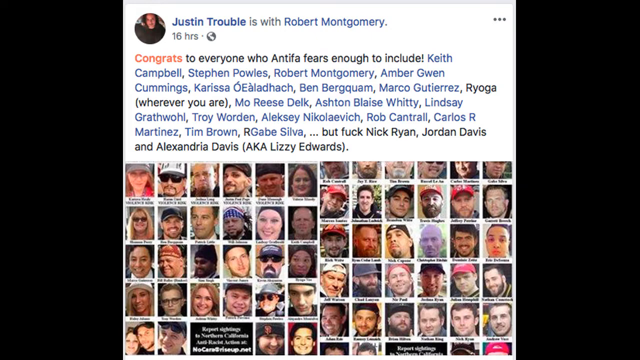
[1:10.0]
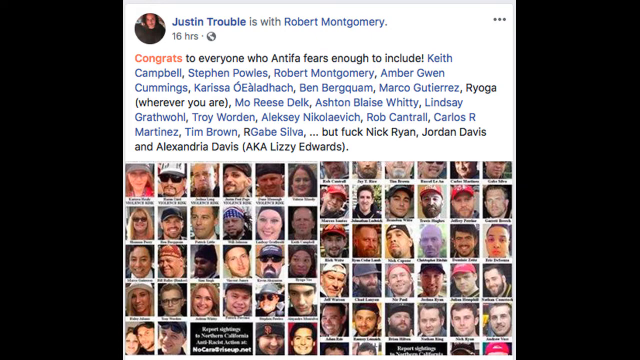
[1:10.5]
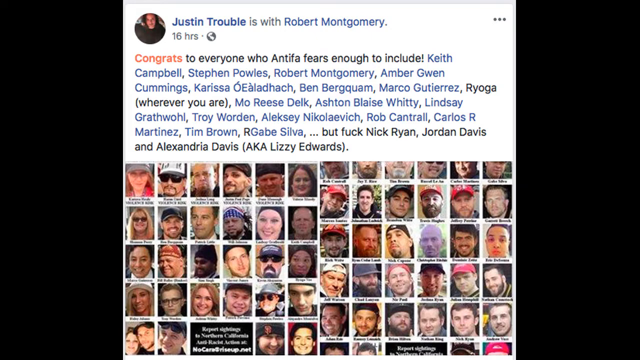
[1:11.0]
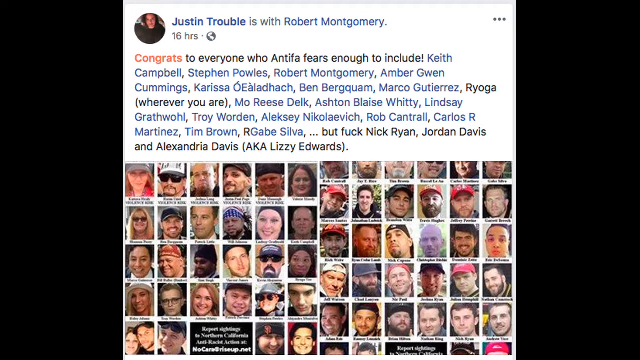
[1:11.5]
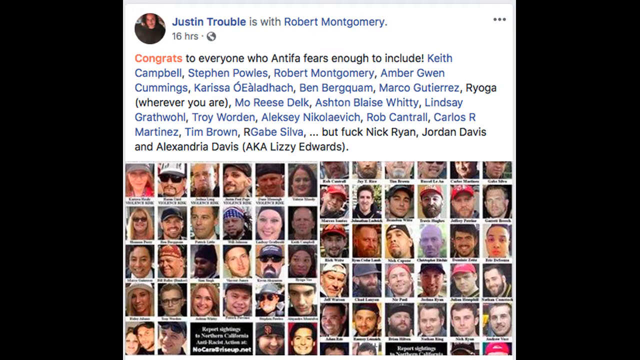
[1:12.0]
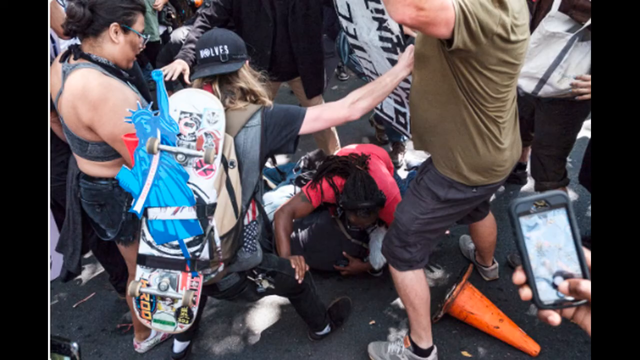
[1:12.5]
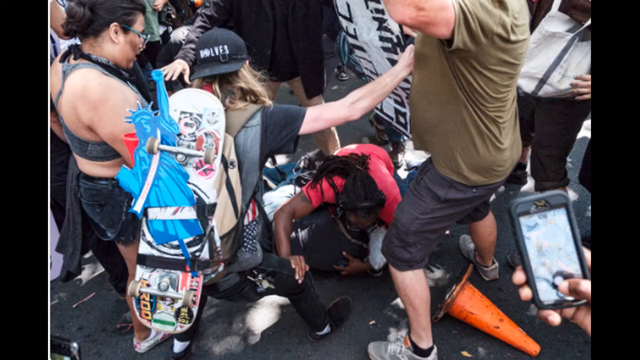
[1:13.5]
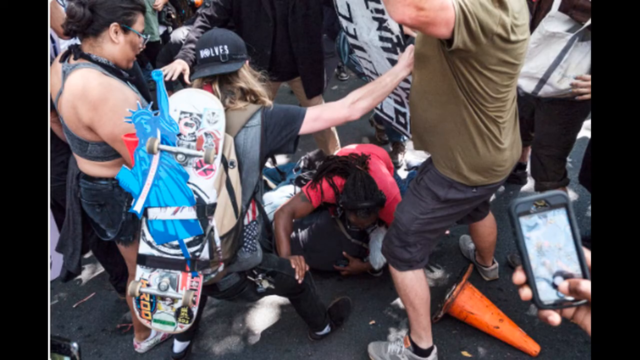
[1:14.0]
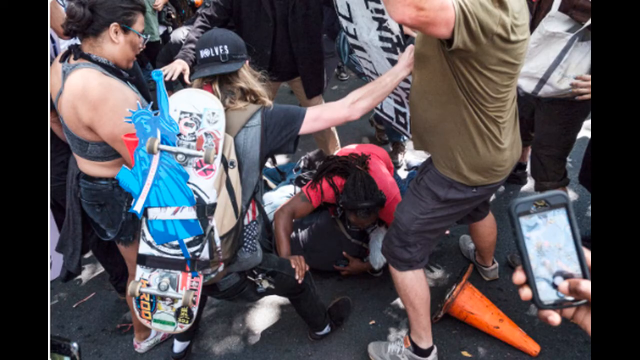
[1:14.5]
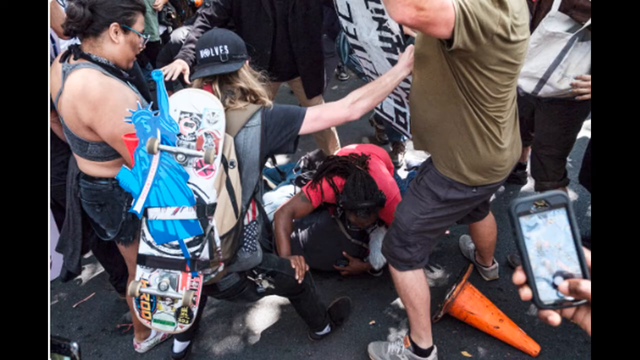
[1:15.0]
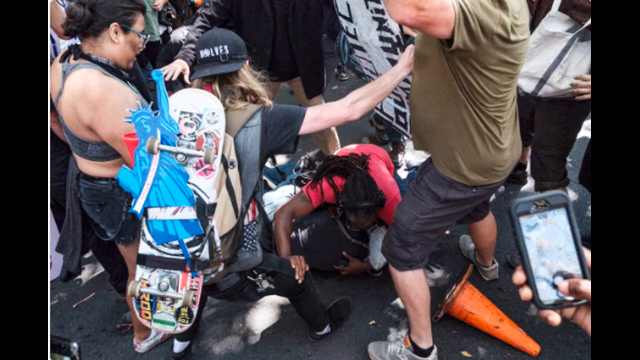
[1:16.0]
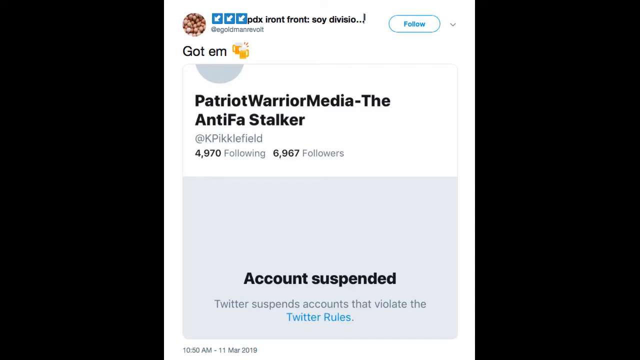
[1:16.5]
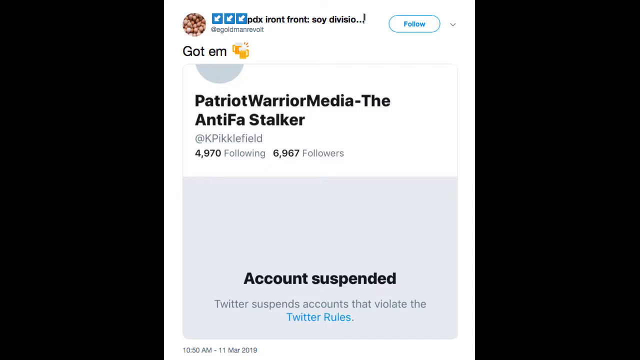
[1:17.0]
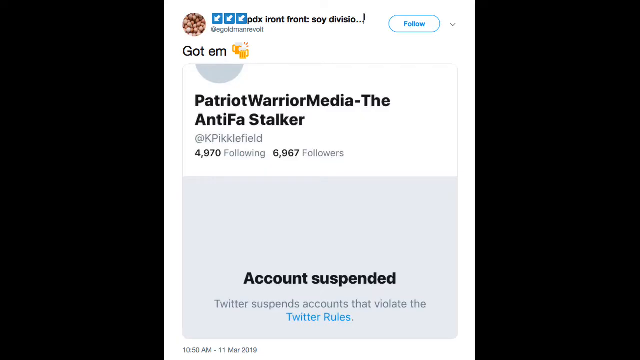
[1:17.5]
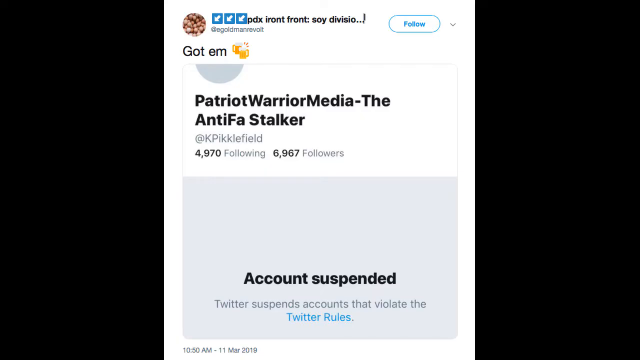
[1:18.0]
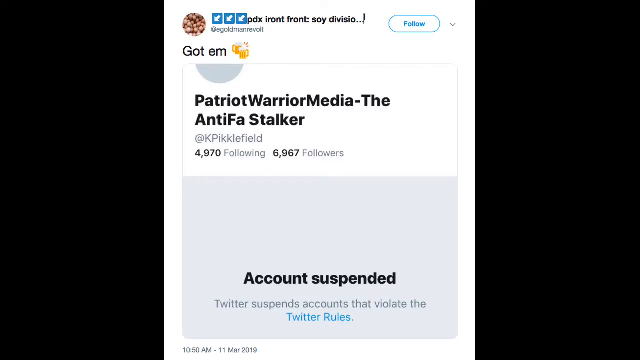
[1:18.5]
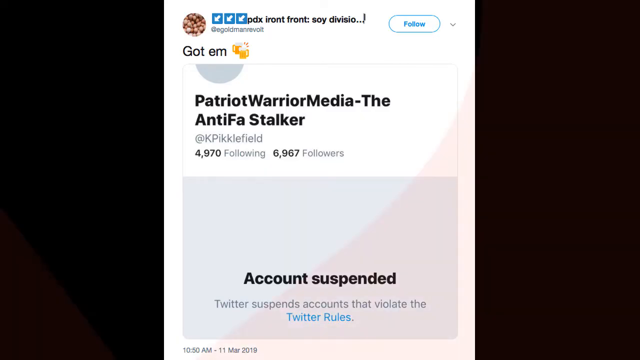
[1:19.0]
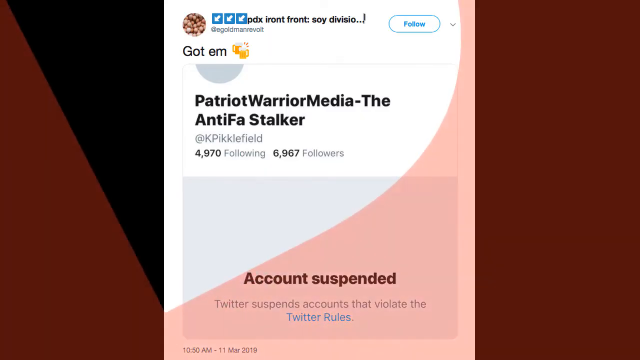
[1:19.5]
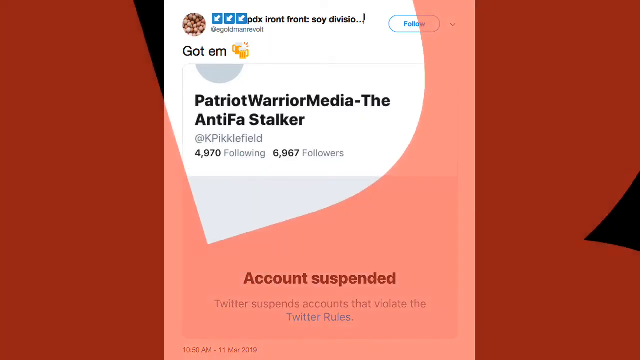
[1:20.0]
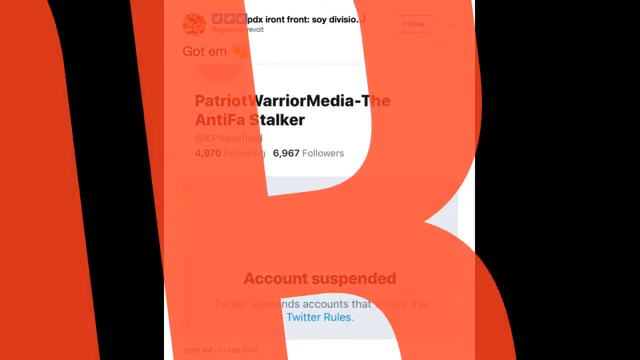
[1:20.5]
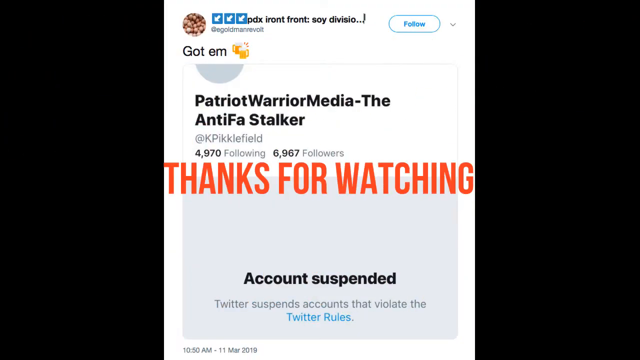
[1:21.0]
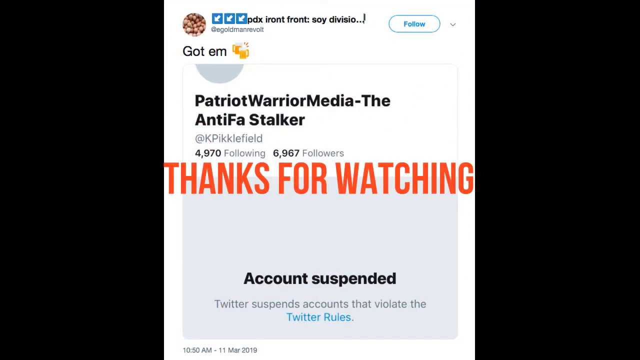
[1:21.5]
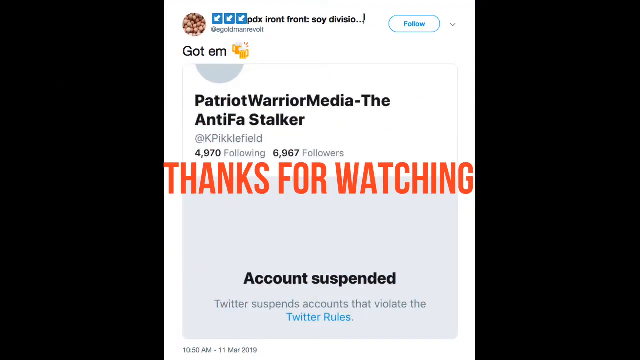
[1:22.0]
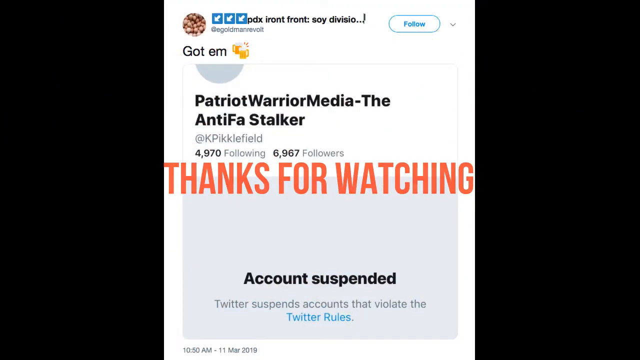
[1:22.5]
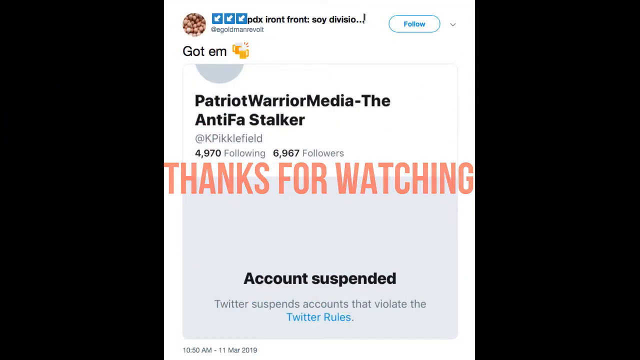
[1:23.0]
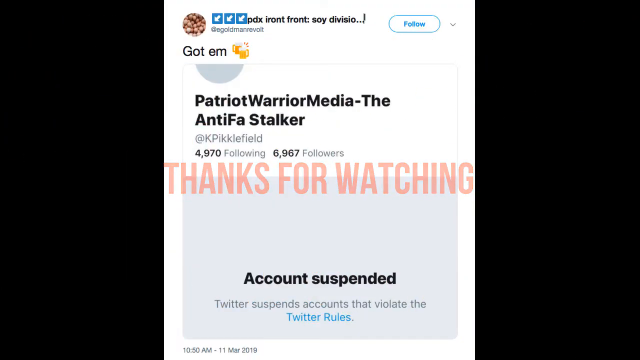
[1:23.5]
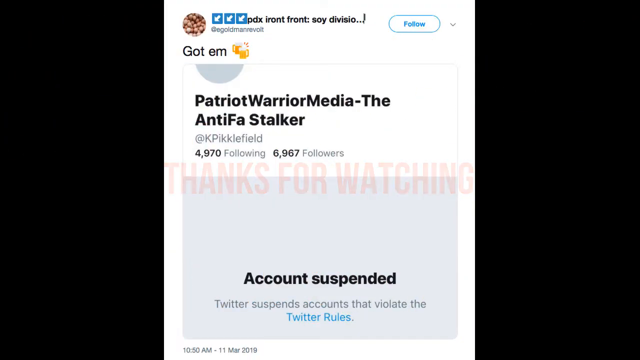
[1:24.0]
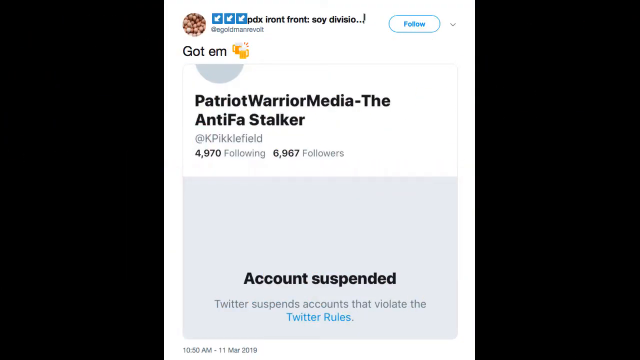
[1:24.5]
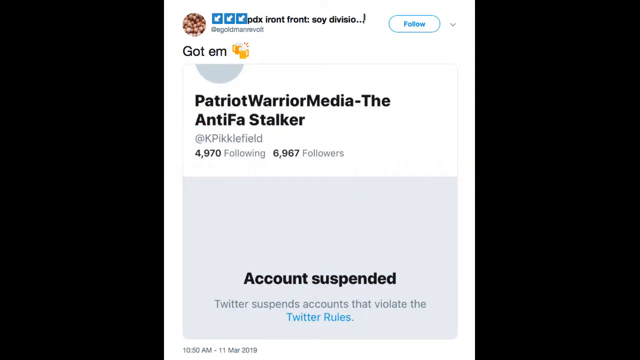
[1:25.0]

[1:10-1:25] A fair use disclaimer appears on a navy blue background. The patriotic warrior media logo follows, with a man kneeling on it and patriotic colours of white, blue and red. Next is the Proud Boys media logo with a yellow and black theme, then the patriotic warrior podcast, where a man in a black hoodie is folding his hands. A very strong man stands in front of the cream wall, with a black door at his side. He carries a black stick on his arm and wears a black cap, a black mask, a black long-sleeved top, blue jeans and black boots. A dog in front of him faces upwards, wears a necklace on its neck and stands on dry grass. The man's shadow is on the cream wall. On his right is a red and black flag leaning on the black door. The video's theme seems very patriotic. A man in a black suit, white shirt and striped tie with short brown hair appears, with another man in a patriotic grey T-shirt on the right. News is presented, and on the same screen a social media screenshot reads "Antifa's top 10 violent assaults on journalists so far", a headline that seems to be from a social media platform. An organic cinnamon bag essential oil headline follows. Other news shows a man being attacked, and more news shows people falling on the ground; it is chaotic. Finally, news of an account suspension appears, and "thanks for watching" is shown on the screen in orange.